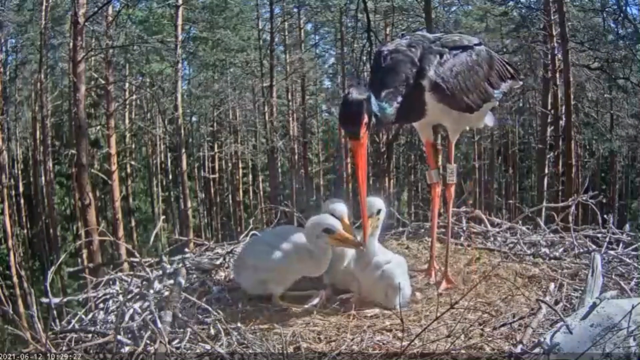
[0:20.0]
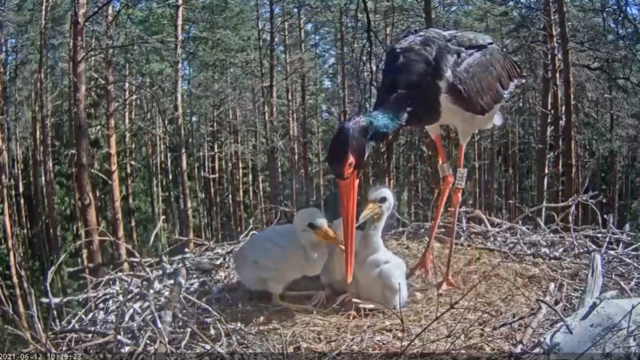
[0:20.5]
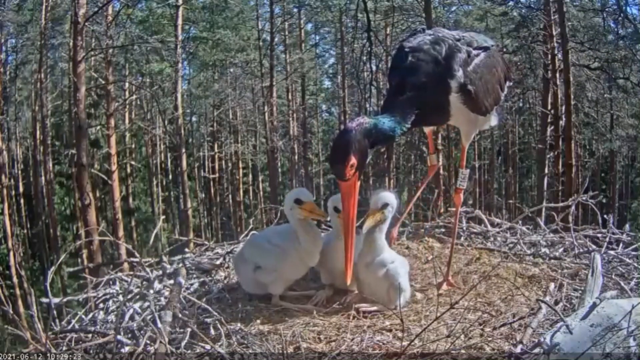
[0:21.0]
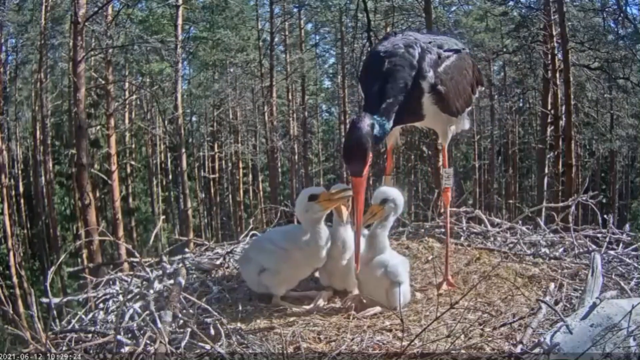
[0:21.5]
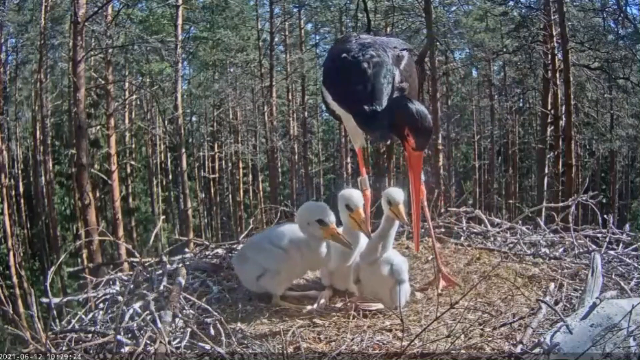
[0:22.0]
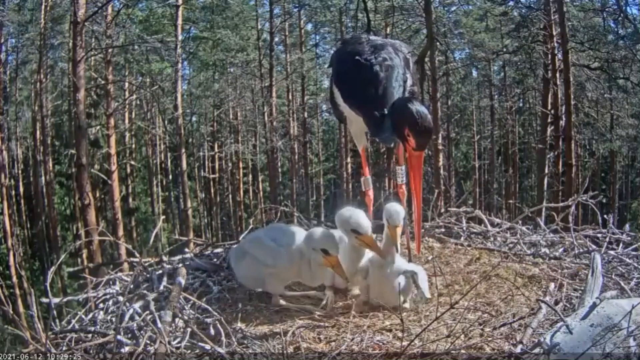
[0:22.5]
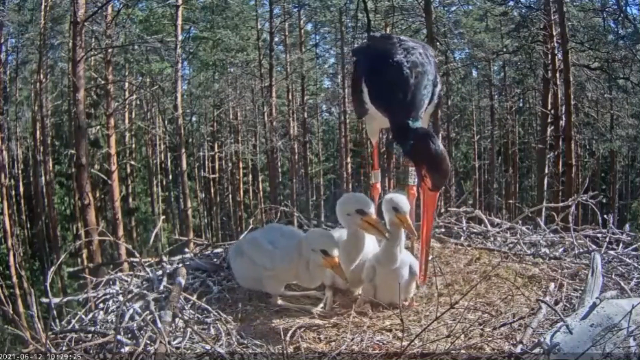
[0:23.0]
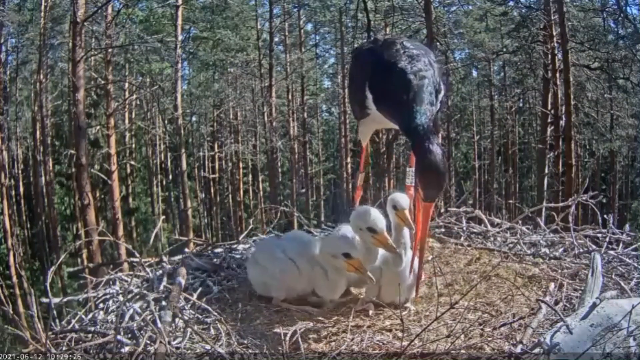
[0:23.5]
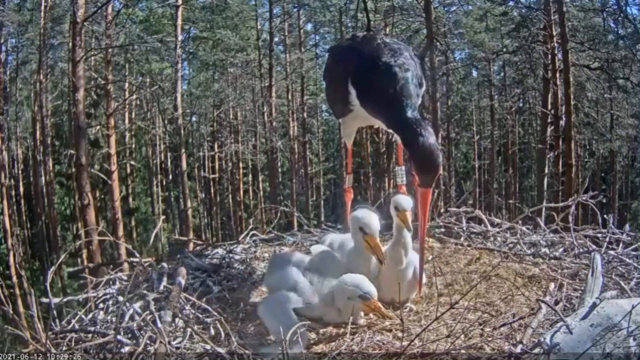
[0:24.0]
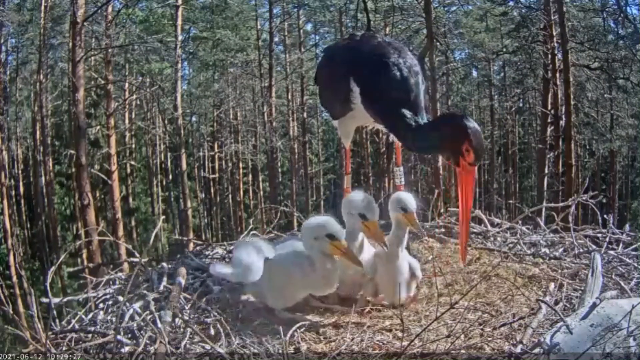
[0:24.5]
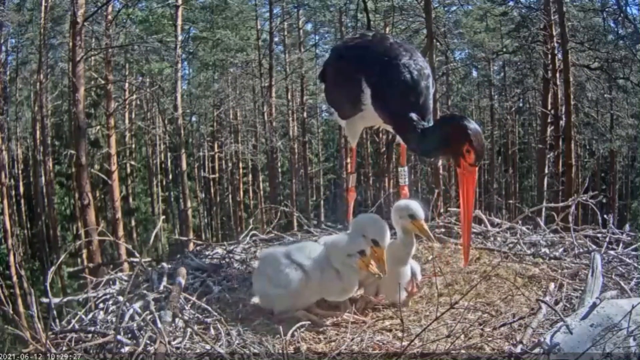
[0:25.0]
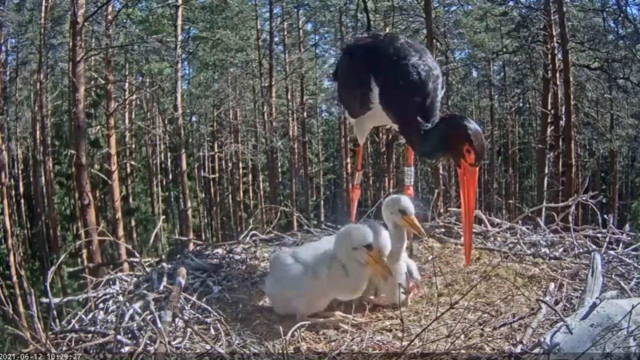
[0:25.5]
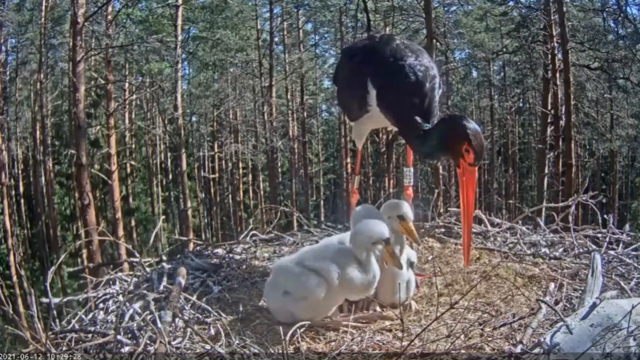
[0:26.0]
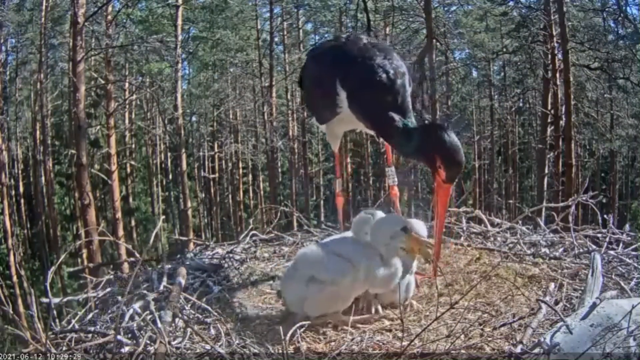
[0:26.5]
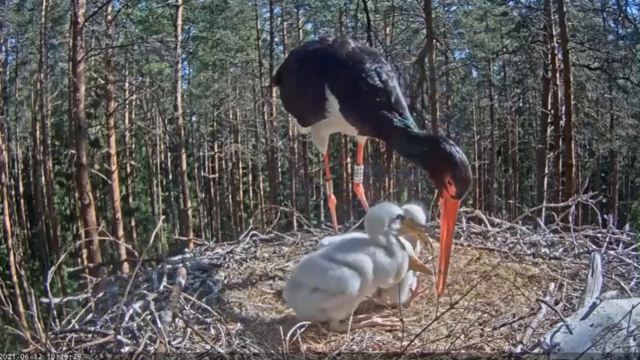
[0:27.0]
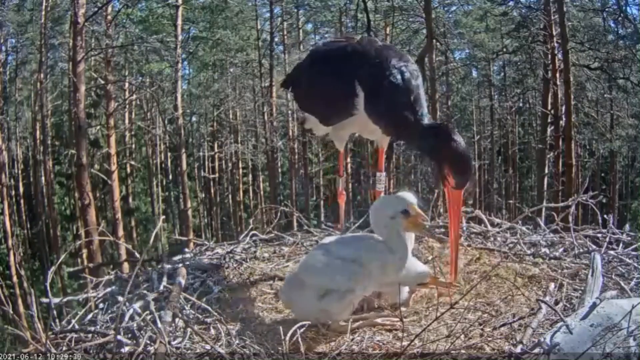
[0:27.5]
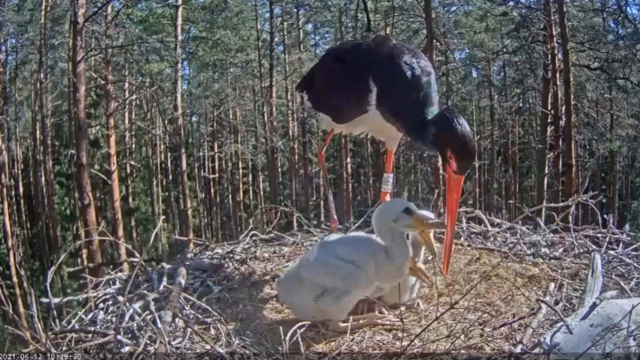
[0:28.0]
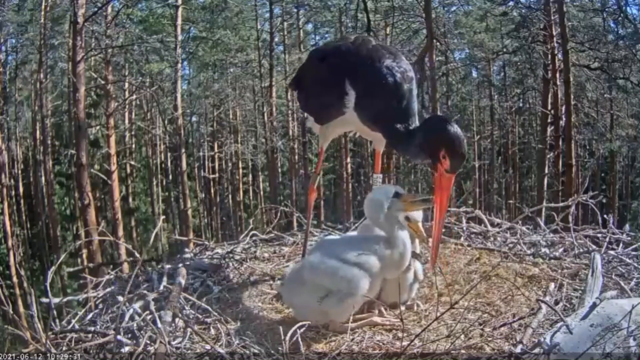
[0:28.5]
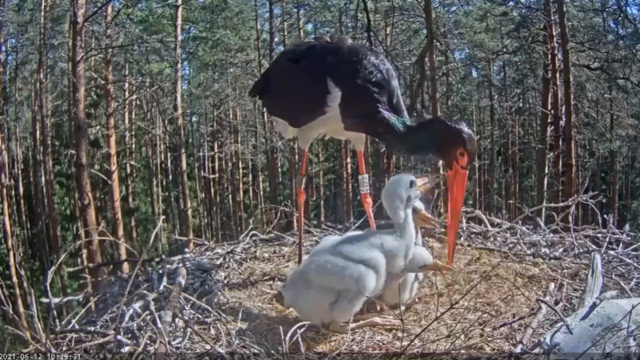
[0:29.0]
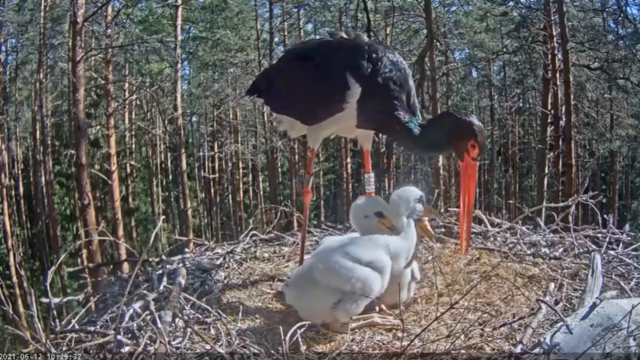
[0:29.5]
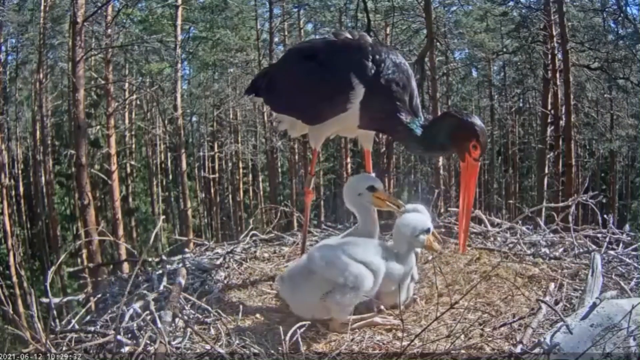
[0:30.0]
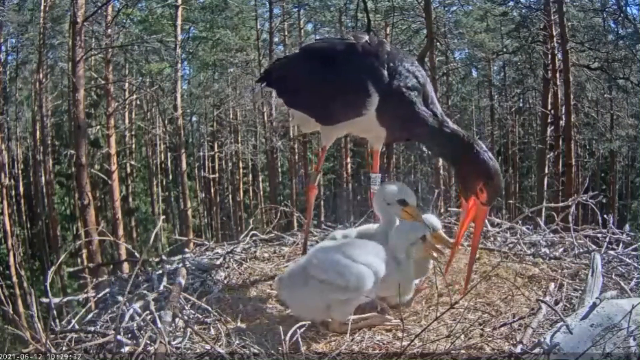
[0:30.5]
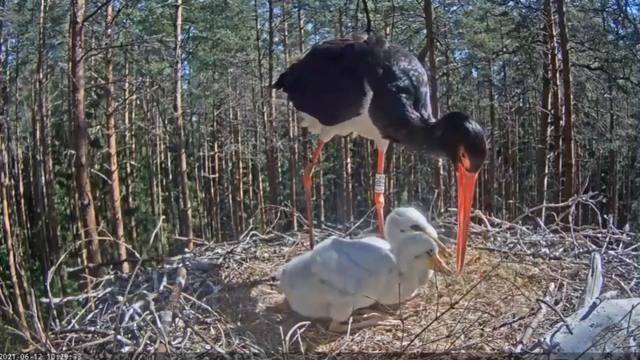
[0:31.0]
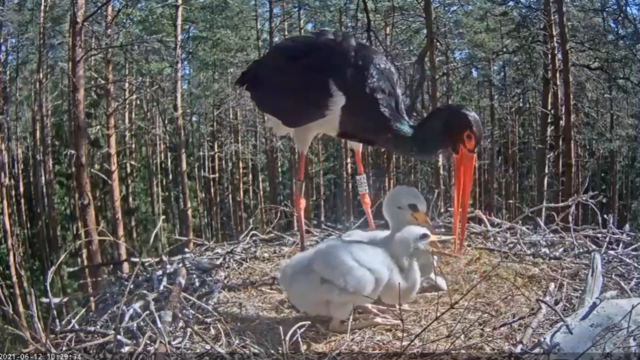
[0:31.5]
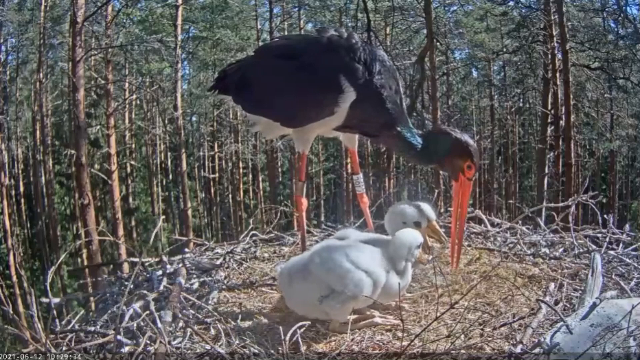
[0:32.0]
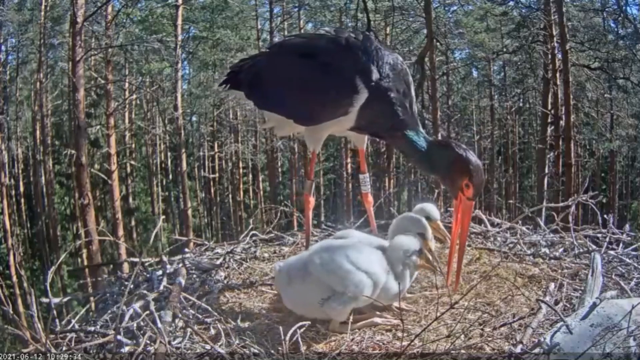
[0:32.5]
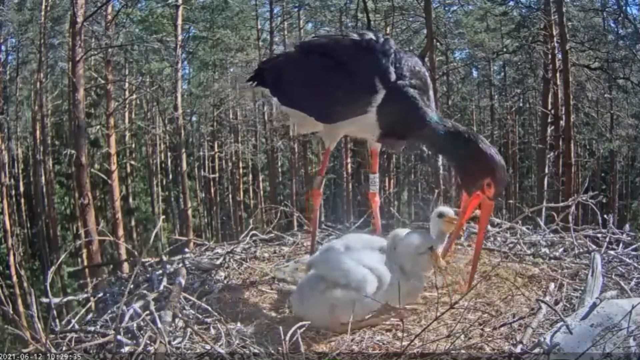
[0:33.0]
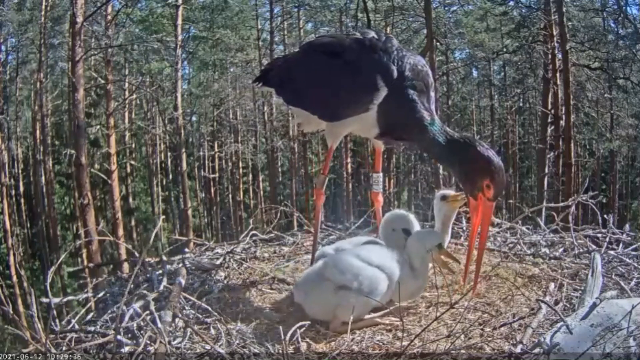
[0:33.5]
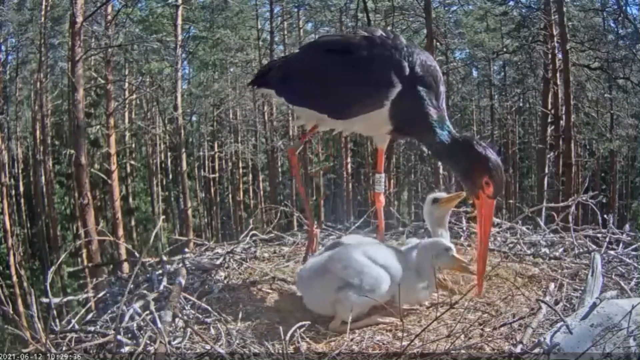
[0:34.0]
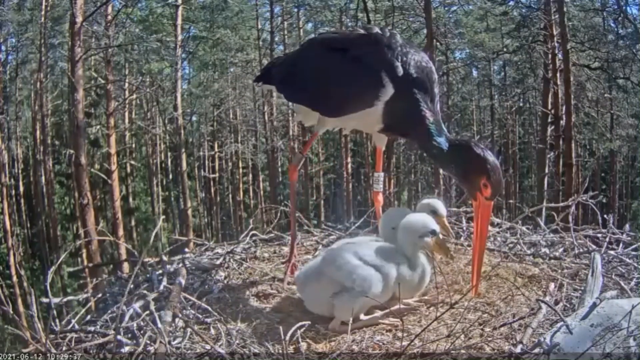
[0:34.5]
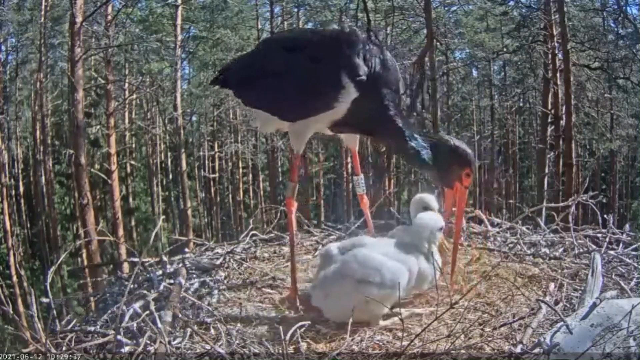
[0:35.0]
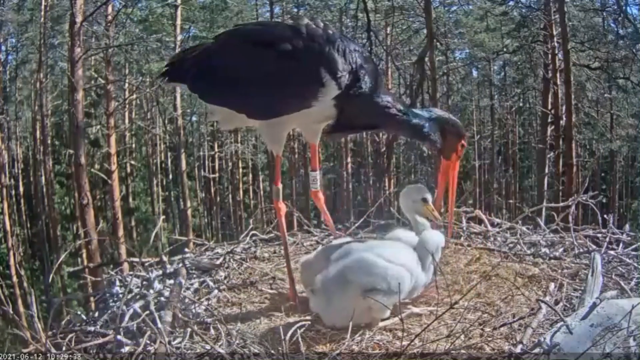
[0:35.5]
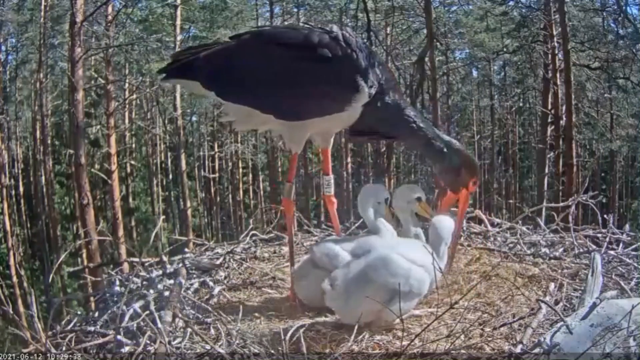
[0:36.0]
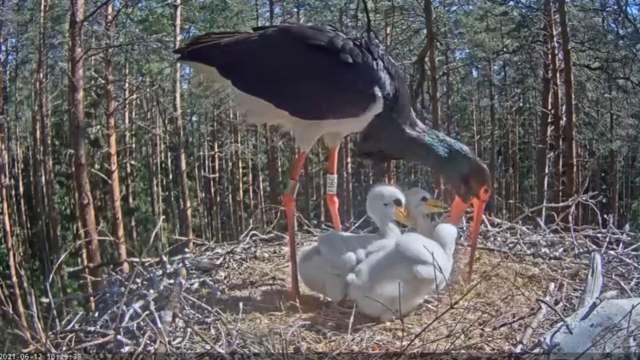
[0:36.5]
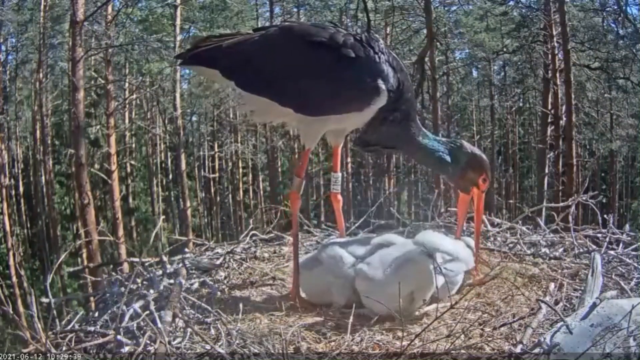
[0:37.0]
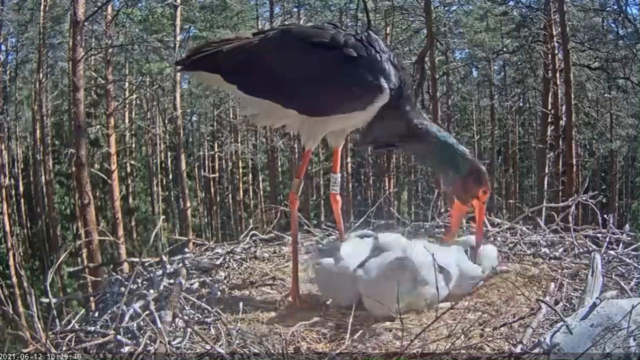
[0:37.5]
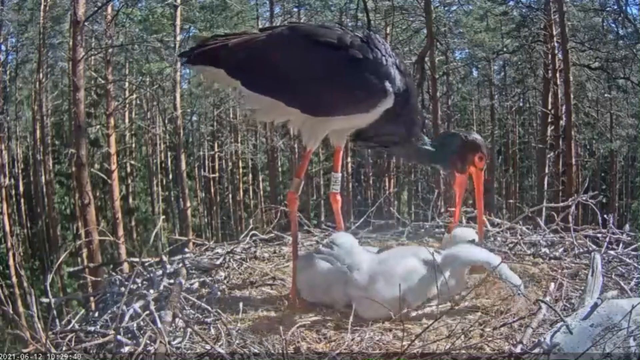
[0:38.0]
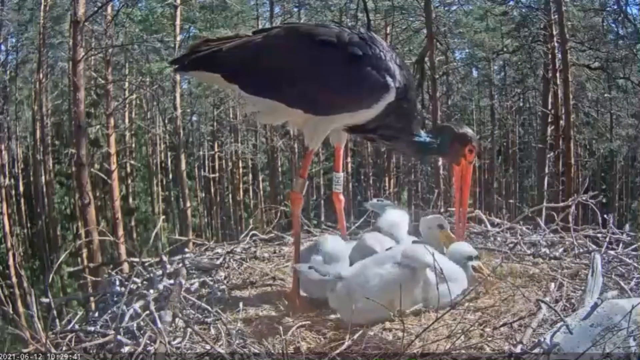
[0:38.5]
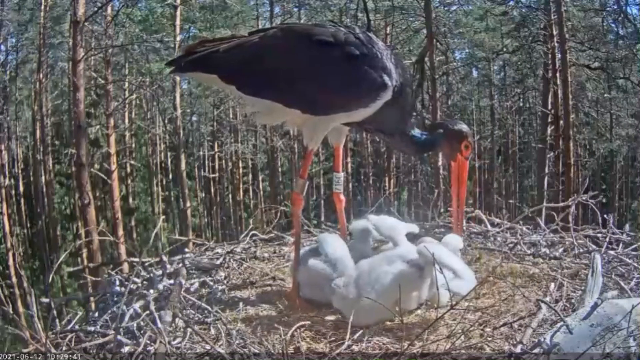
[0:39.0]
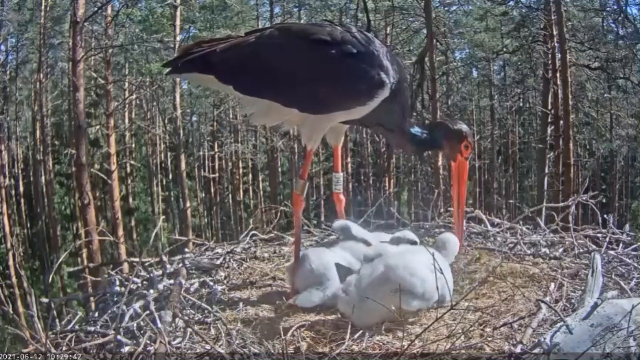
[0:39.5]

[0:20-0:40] A mother bird that looks like she may be some sort of crane feeds and takes care of three baby birds in her nest. She has very long, slender legs and a very long, pointy beak, both the same reddish-orange color, and a very long curved neck. Her whole back and head are black, her underside is all white, and her skinny legs reach all the way down into the nest. She appears to have been tagged, with what look like bracelets or metal etchings on the skinny upper part of the leg. The baby birds are all very interested in the mother and seem to follow her beak around, almost nipping a little at it, as if maybe asking her to feed them.